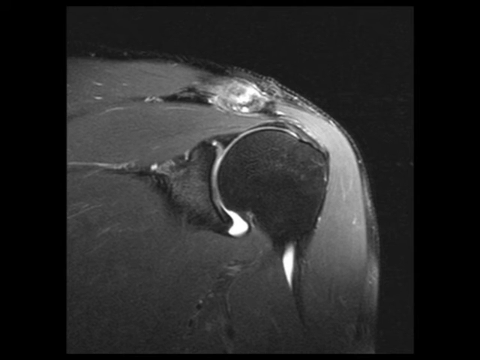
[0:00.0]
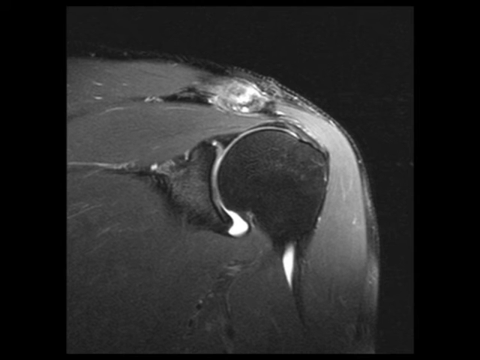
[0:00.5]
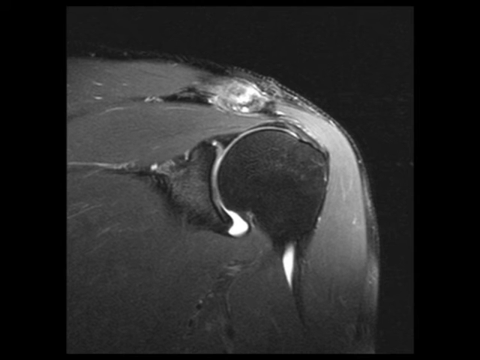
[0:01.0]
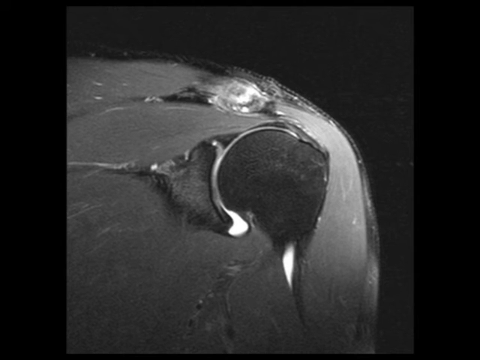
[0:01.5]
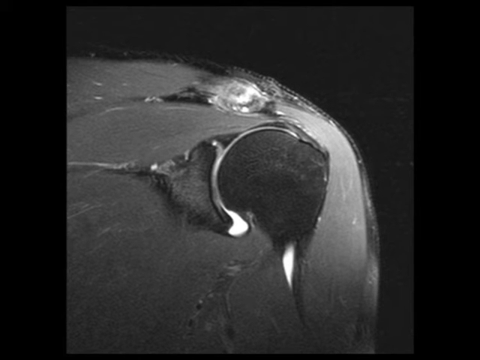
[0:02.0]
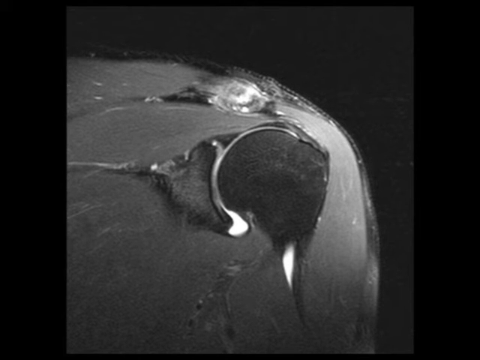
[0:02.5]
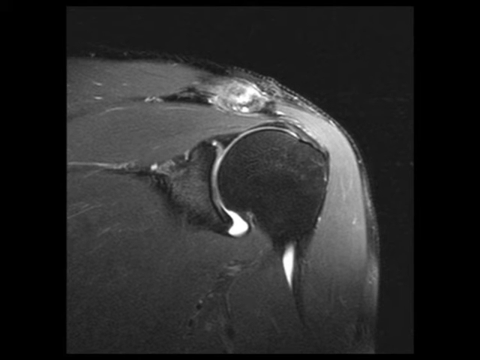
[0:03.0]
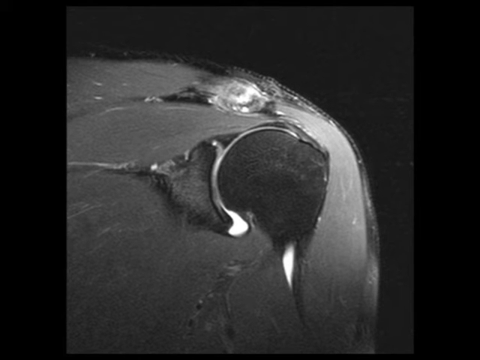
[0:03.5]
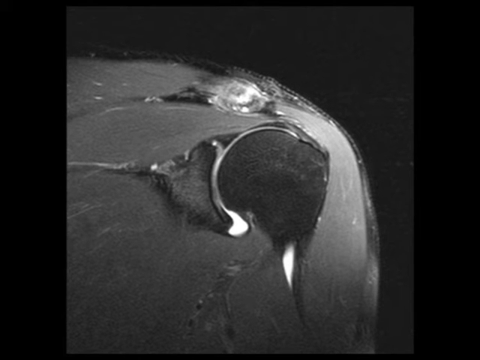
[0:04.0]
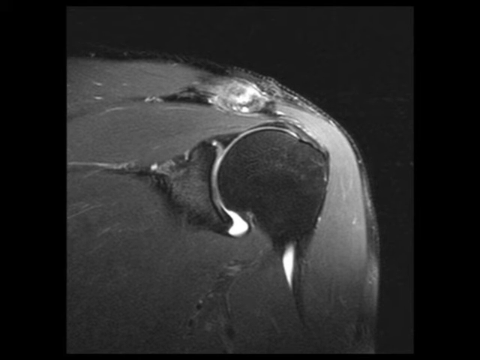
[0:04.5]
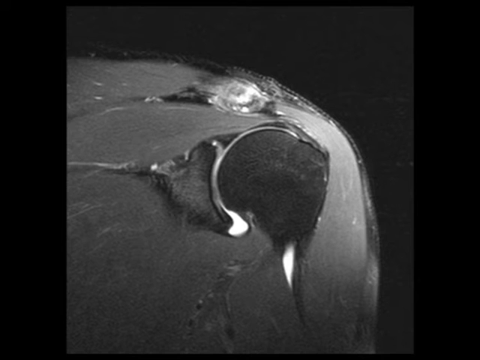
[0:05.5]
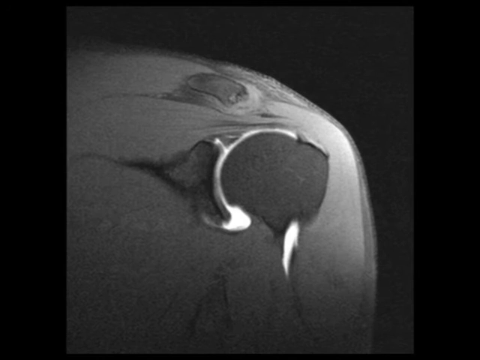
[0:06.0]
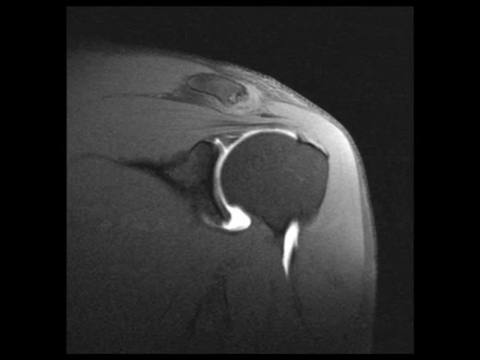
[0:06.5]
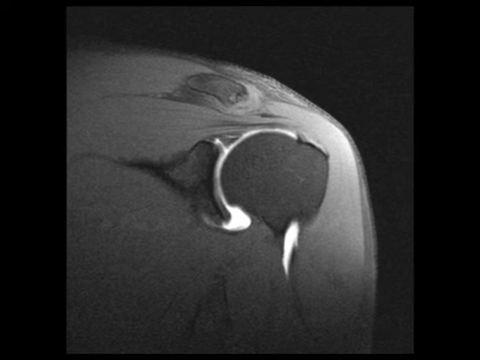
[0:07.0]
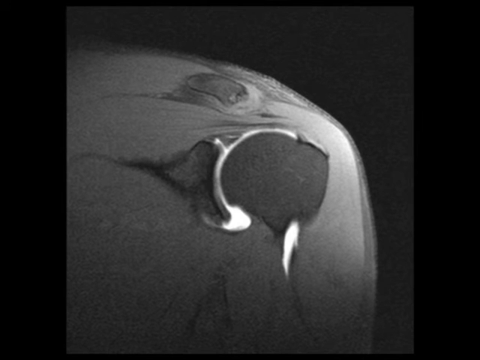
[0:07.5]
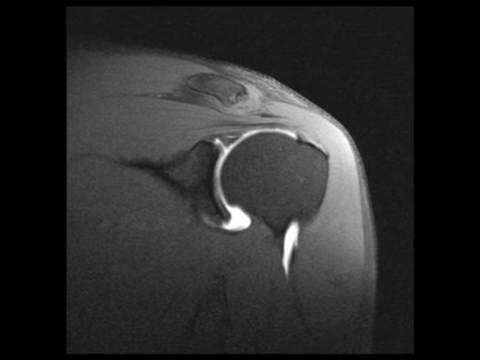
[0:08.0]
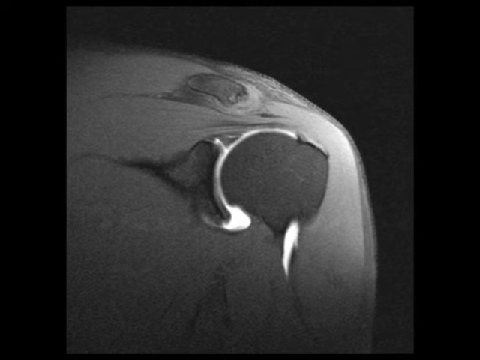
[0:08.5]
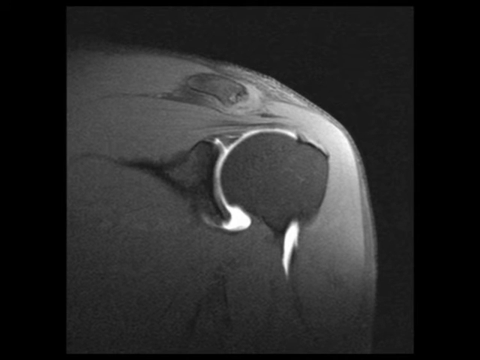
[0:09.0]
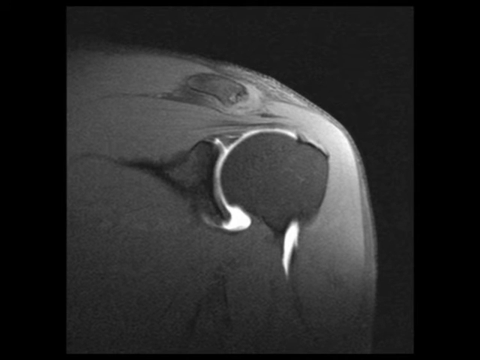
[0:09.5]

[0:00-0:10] Against a black background, an image appears on the screen that almost looks zoomed in on something you would find on a slide, like a bacterium or some other microscopic organism; it also almost looks like it could be the moon's surface. The image is gray. There seems to be an area that is black, like a deep part of the thing or something located there, and another part that is almost like a little nodule, blurry inside with white mist in it, and white dots on it. All along the outside there is what looks like maybe some type of membrane, with a fuzzy appearance around it.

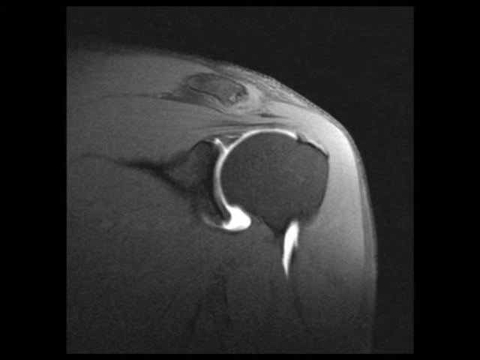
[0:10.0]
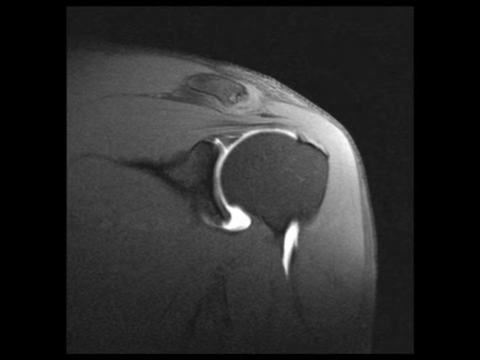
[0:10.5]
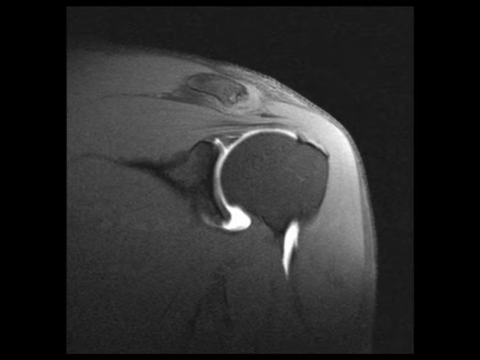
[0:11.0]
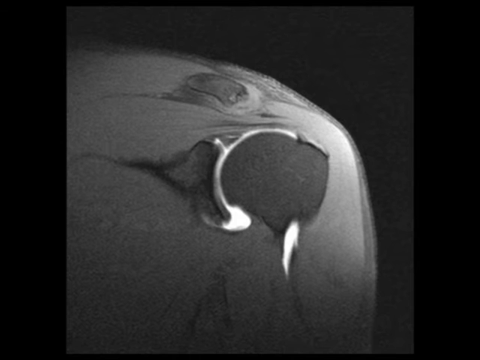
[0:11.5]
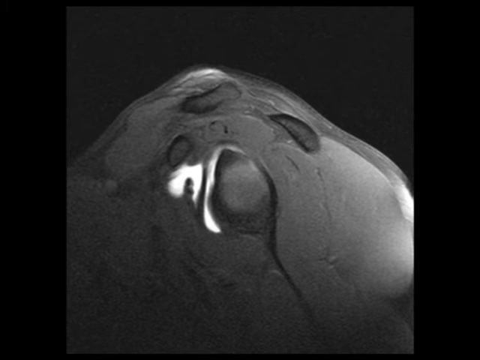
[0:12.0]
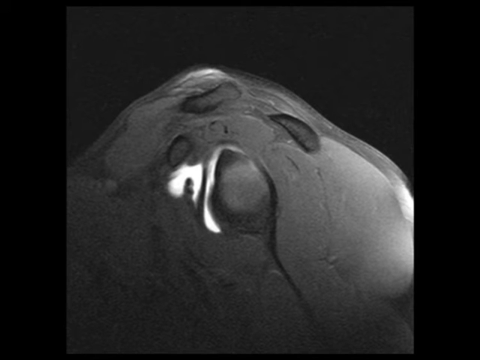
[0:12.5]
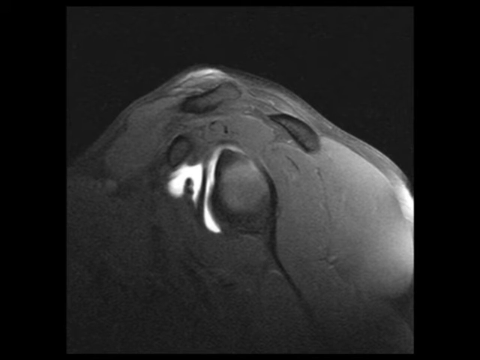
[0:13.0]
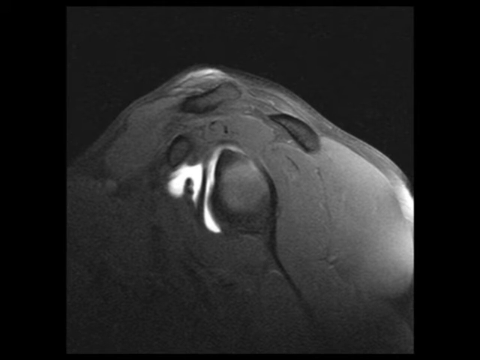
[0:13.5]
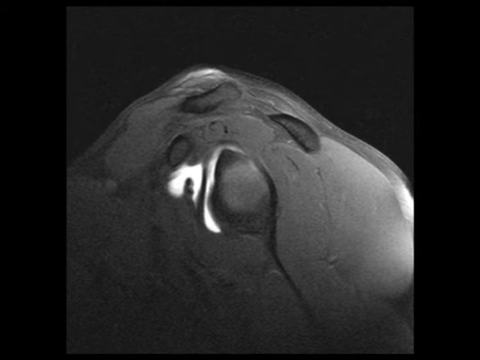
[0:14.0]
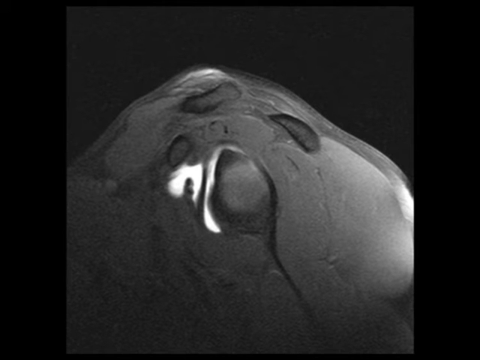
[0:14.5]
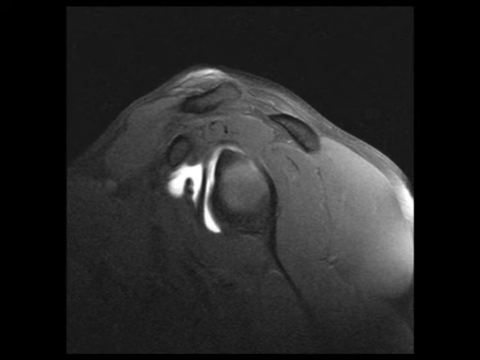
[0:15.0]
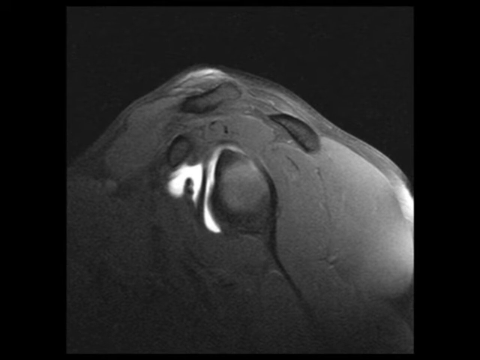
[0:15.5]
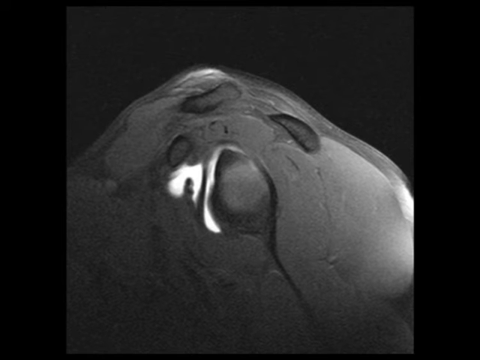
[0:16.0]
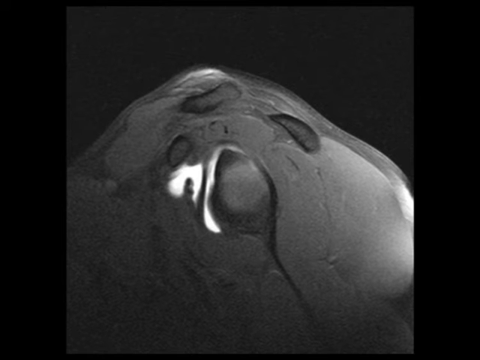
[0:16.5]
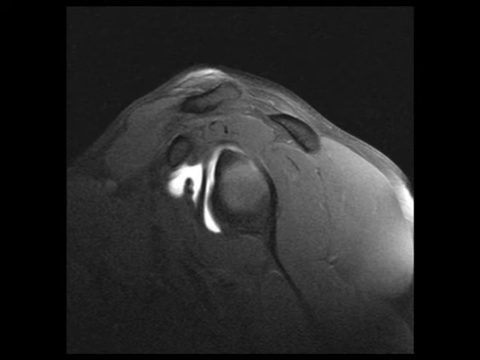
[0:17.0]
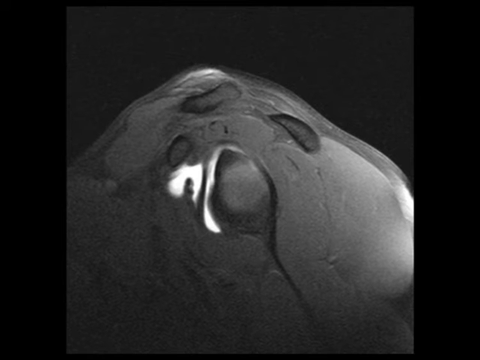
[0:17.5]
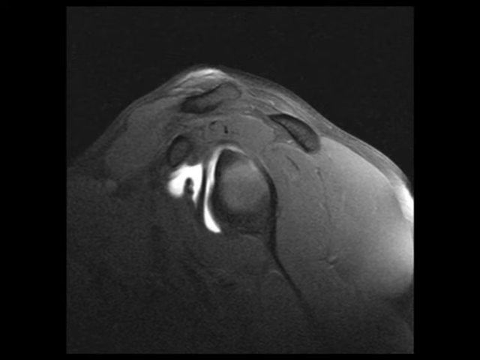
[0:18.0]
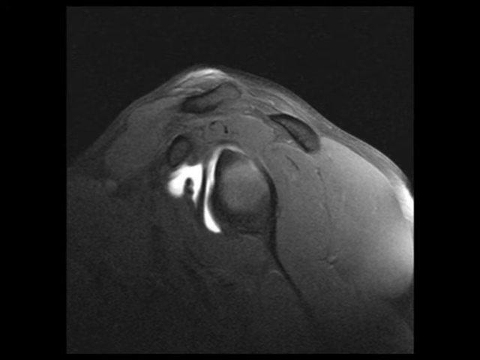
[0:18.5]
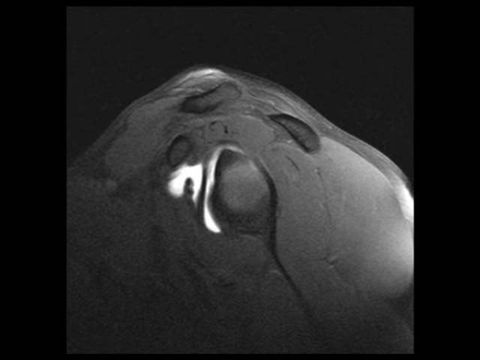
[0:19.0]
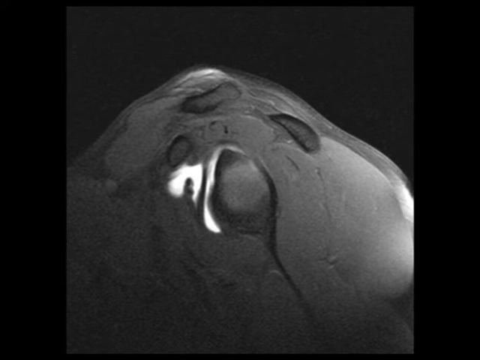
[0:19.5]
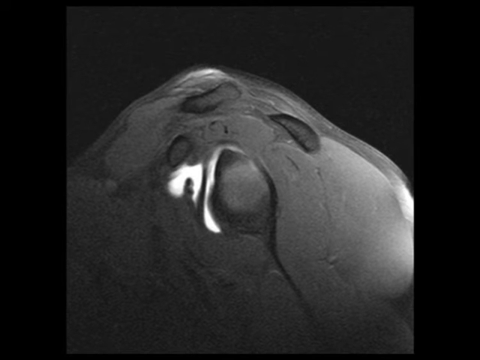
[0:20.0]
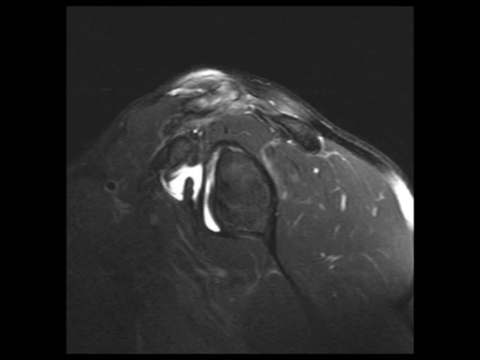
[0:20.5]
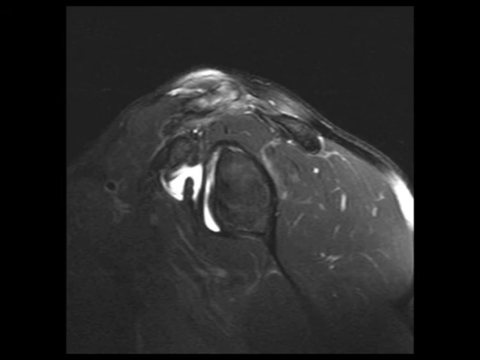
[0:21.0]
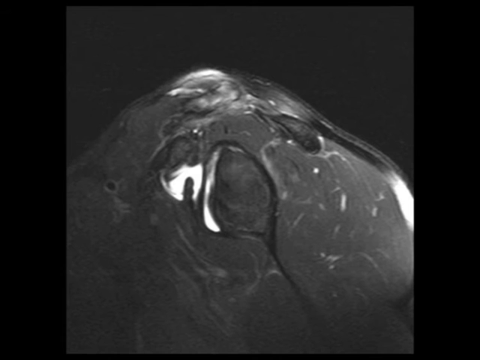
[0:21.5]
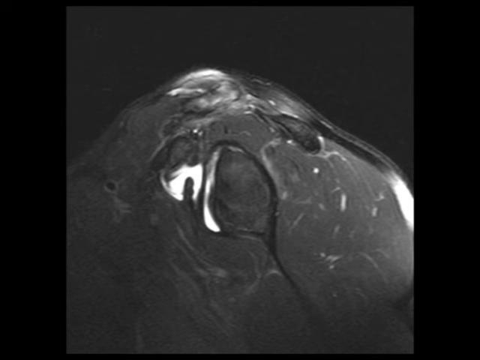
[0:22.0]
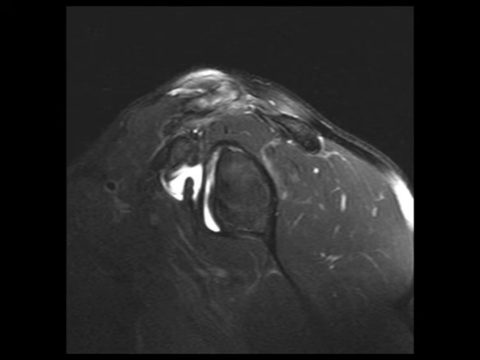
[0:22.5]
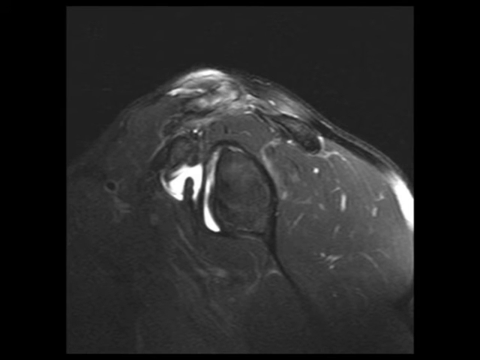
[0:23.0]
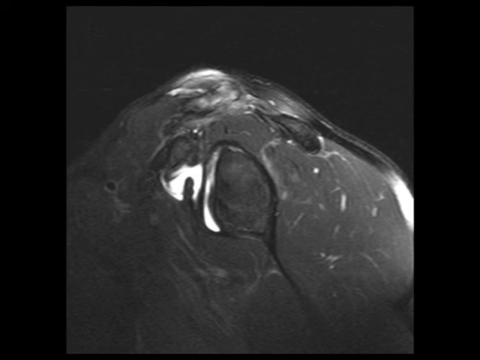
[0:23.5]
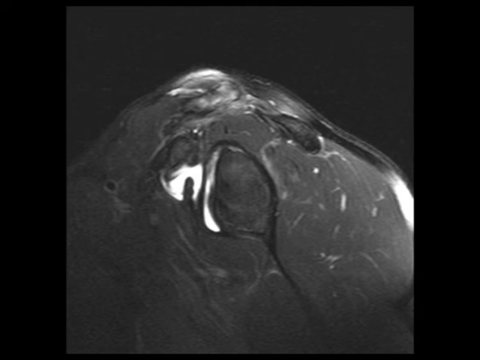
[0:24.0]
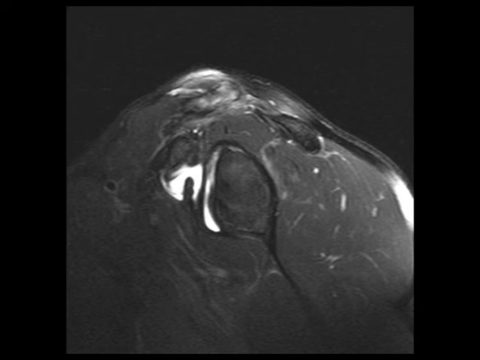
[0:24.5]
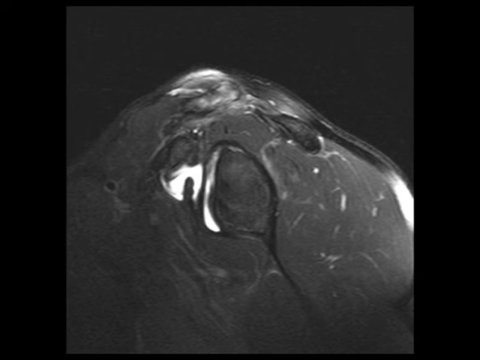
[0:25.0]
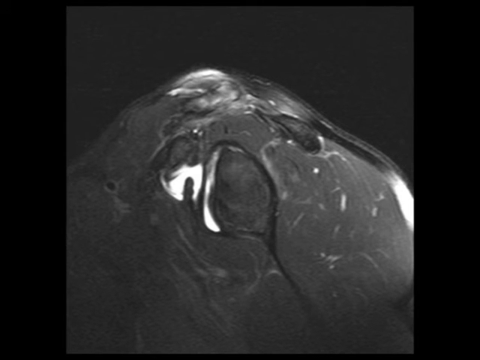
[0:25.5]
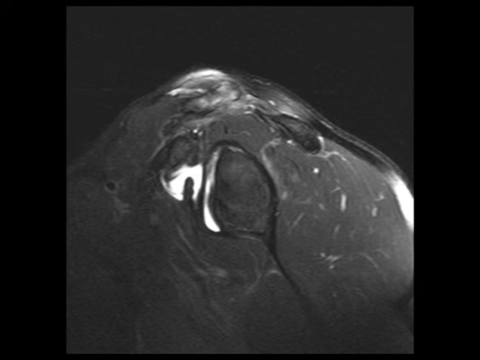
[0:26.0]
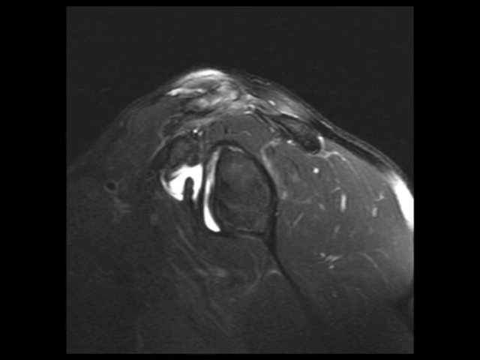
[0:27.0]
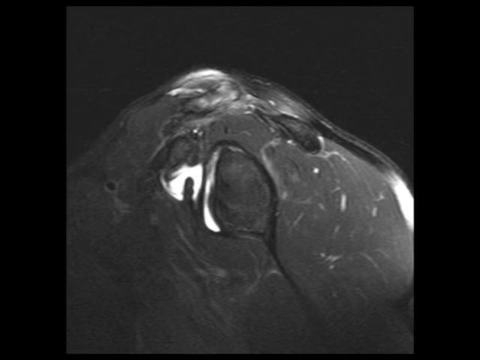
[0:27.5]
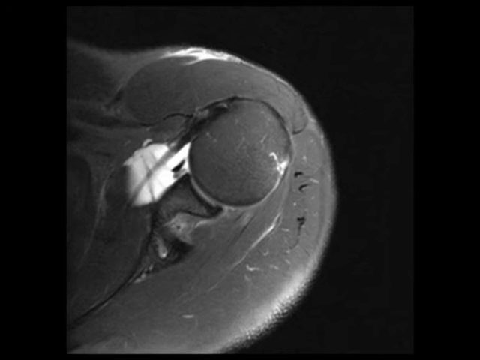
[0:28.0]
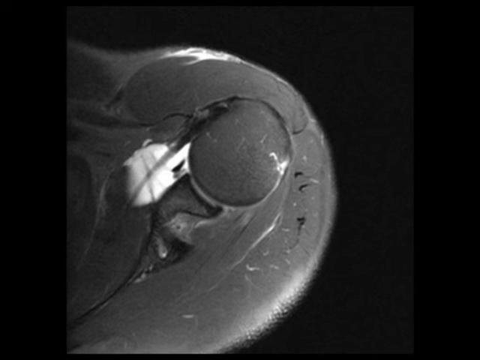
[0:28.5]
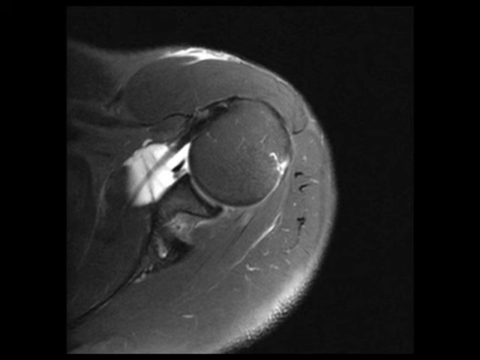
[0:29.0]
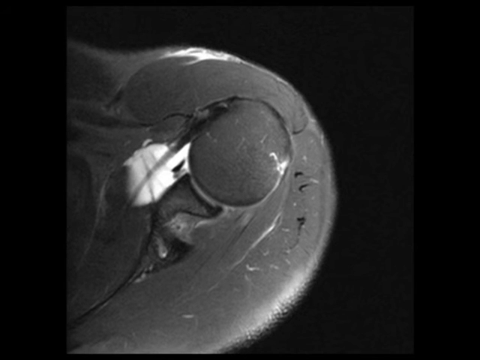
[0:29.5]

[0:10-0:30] The black background remains, along with the unidentified image, which changes. It starts with the original close-up, then switches: among the black holes there is now a big one in the center and three smaller ones near the top of it. Beside the large black one there are areas of white, and there is a small area of white by the hole at the very top. The image changes again, showing more light throughout: the very black hole can no longer be seen because there are now many white patches, more white by the center black hole, and the membrane all around appears more white.